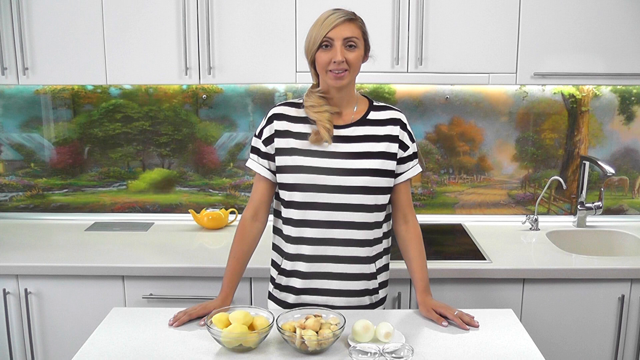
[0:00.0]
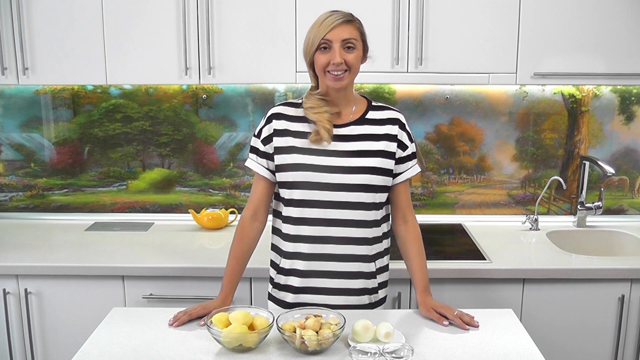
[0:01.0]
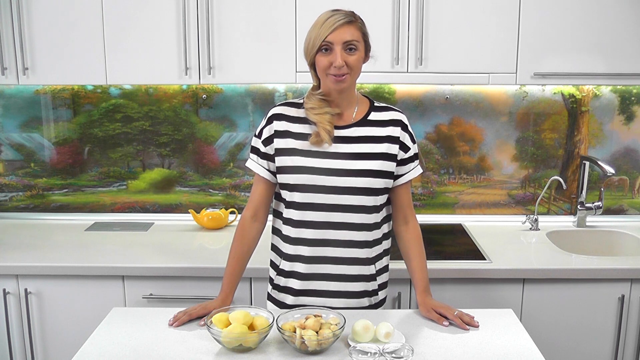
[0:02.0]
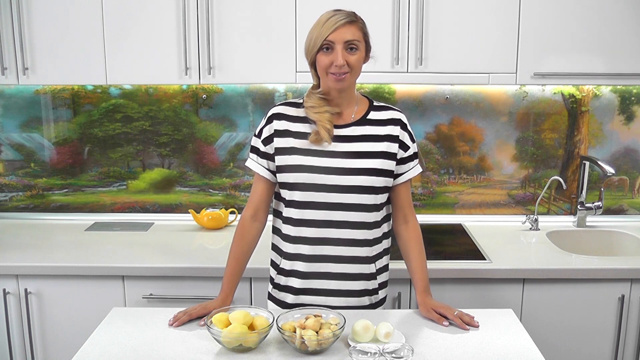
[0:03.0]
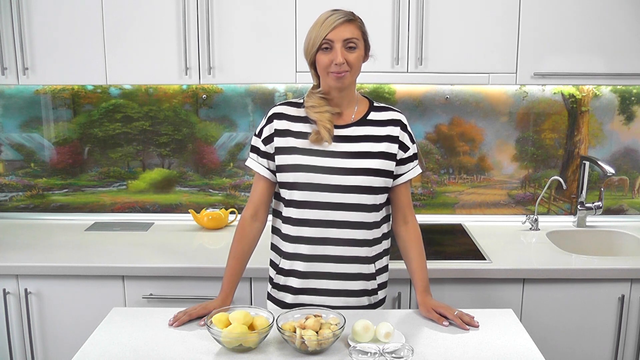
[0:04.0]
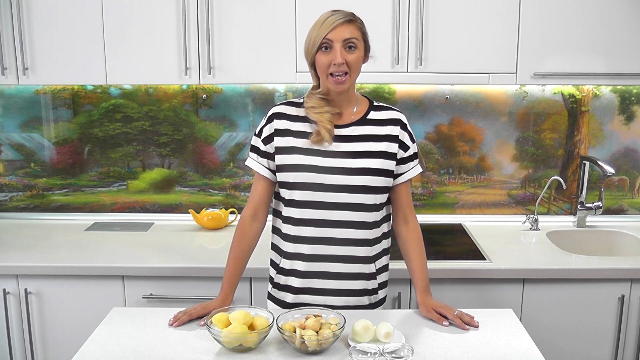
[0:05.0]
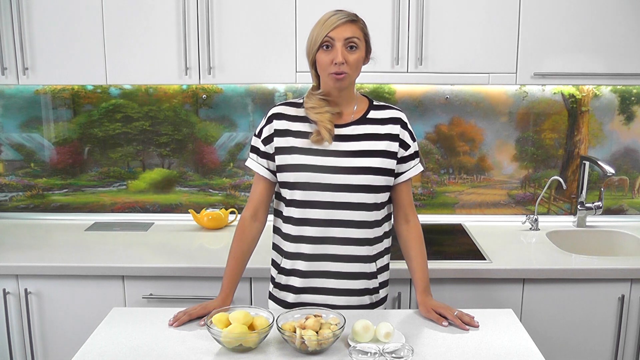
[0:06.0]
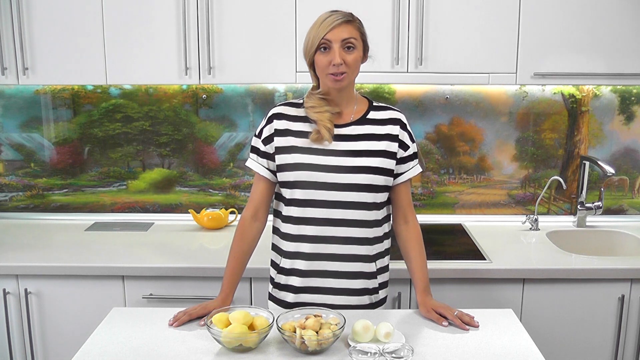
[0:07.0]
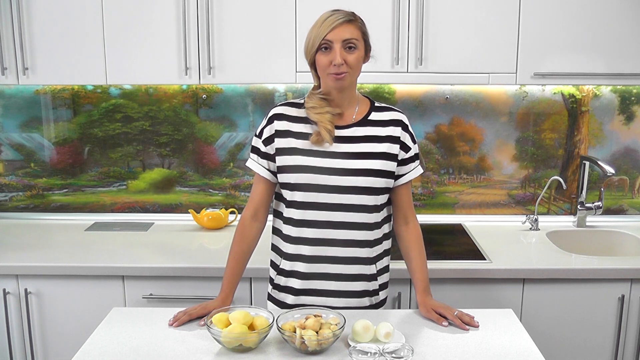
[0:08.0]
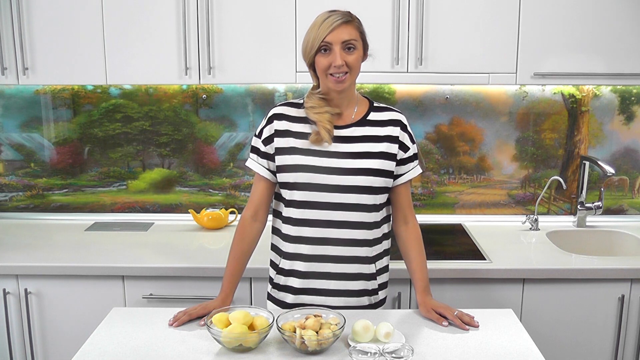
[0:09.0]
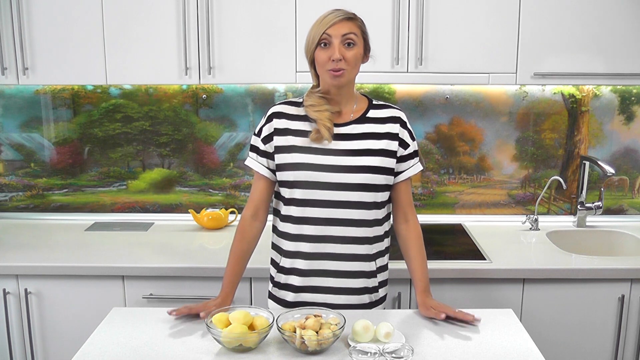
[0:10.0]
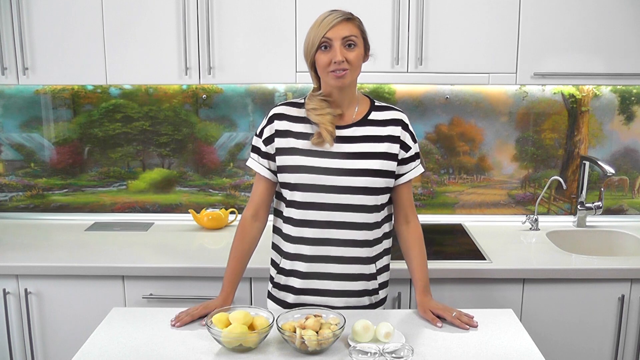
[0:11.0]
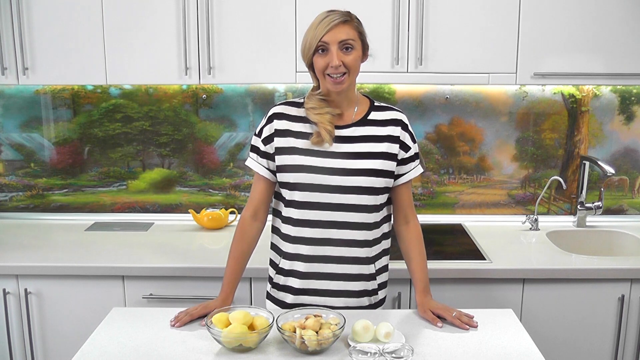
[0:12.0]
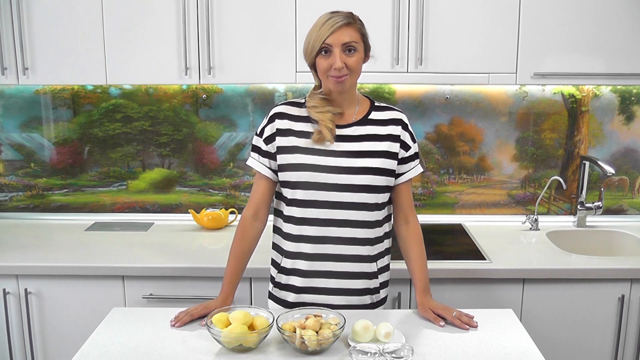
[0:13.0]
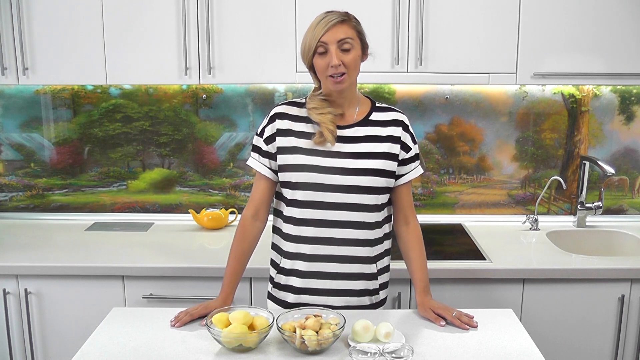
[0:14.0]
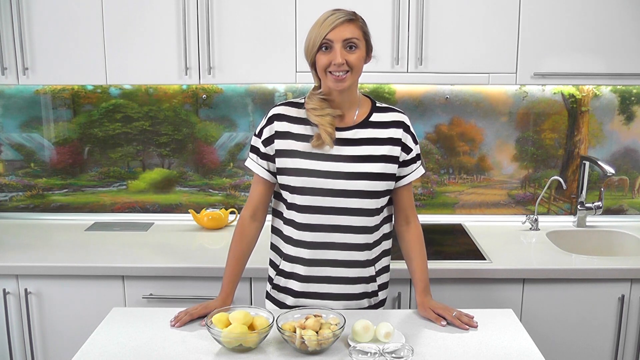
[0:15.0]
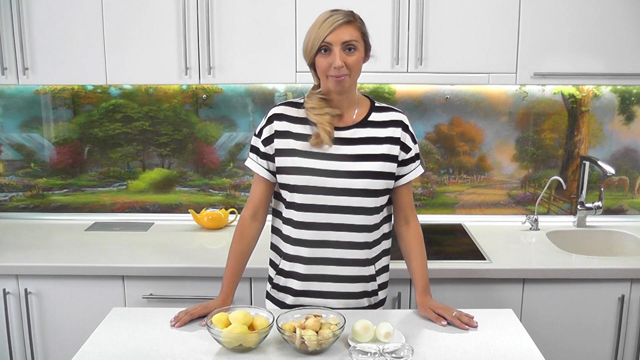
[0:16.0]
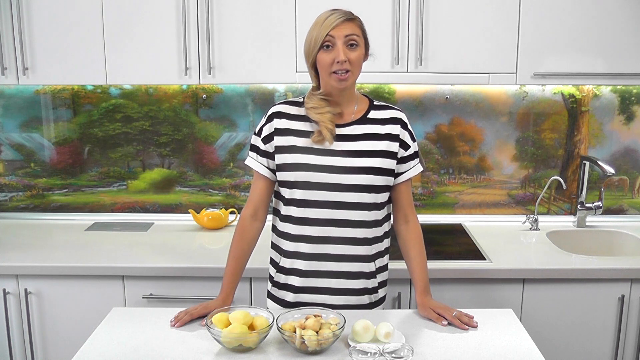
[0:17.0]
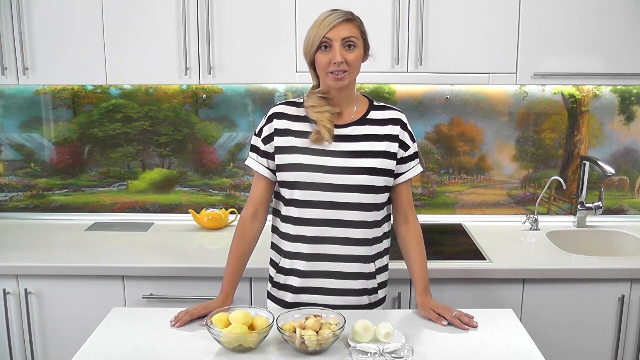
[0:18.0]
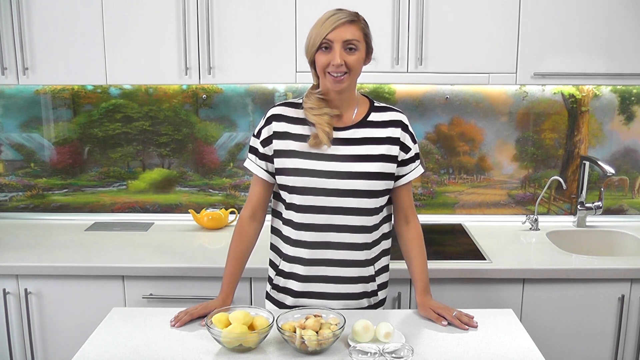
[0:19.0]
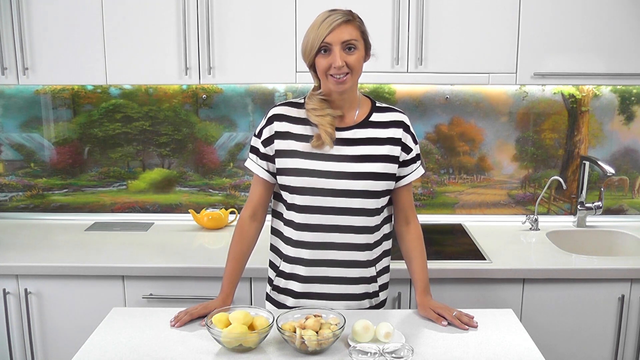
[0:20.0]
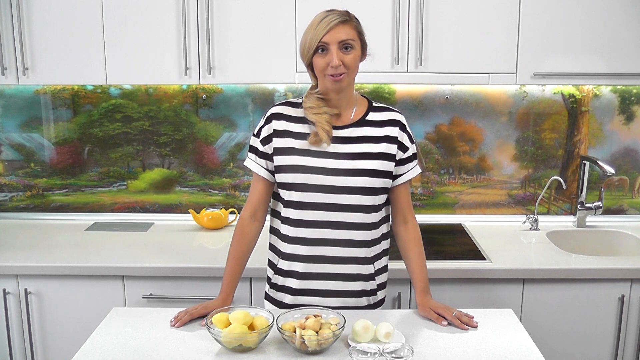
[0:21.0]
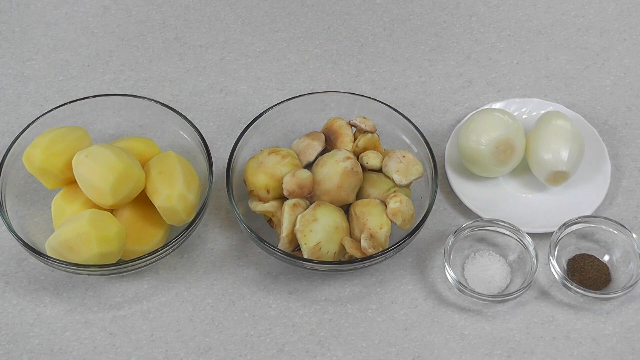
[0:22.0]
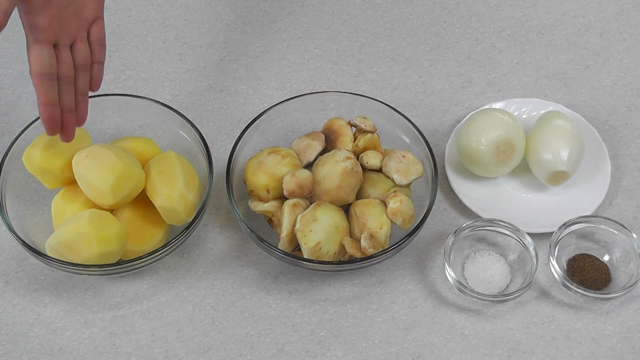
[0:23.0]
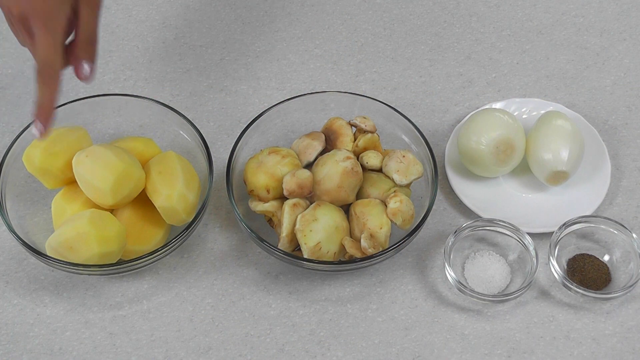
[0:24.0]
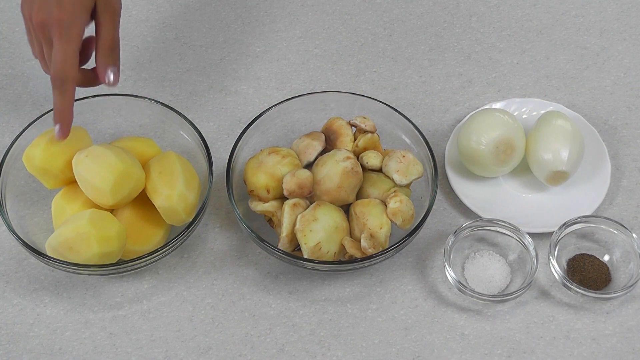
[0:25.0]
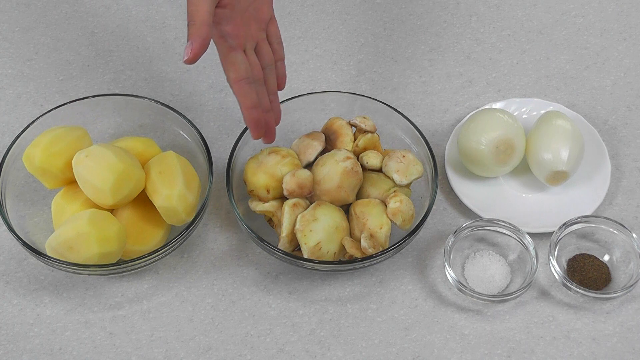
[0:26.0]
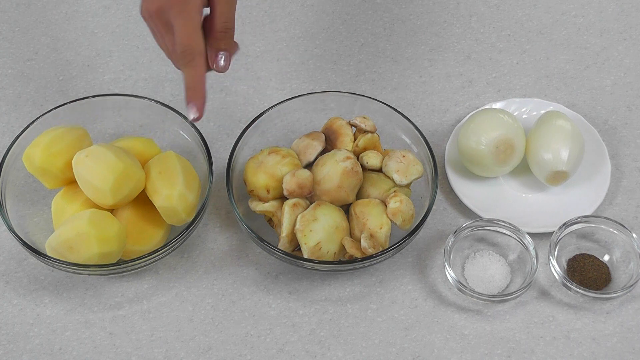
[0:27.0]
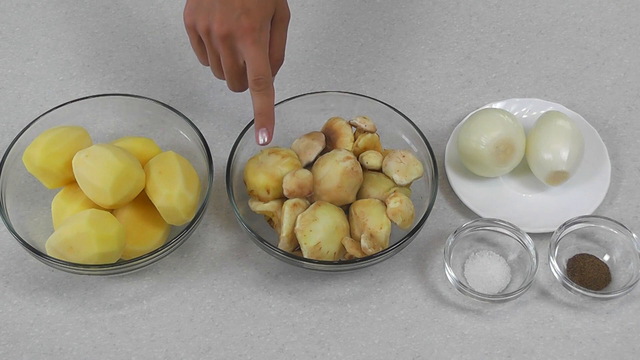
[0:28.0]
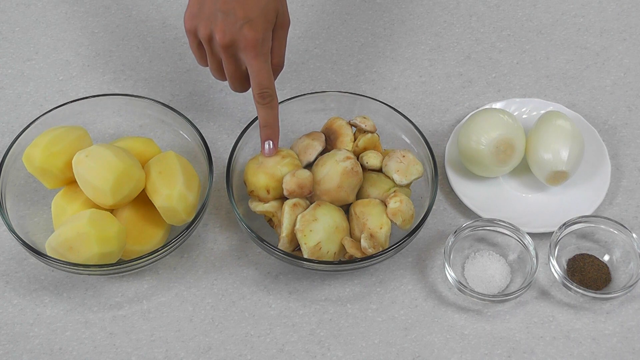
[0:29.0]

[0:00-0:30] A woman with blonde hair, twisted in a somewhat unusual way, wears a silver necklace around her neck. A sink is visible, possibly with a soap pump beside it, and a flat top is behind her. There is a small yellow bowl, and in a bowl in front of her is what appears to be potatoes or something similar. She seems to be getting ready to prepare a recipe on a white countertop, with kitchen cabinets in the background. She talks into the camera, staring at it as she speaks, and moves her fingers; she wears some jewelry on her hand and her fingernails are painted. She points at the potatoes. She also has some onions and possibly some salt and pepper.